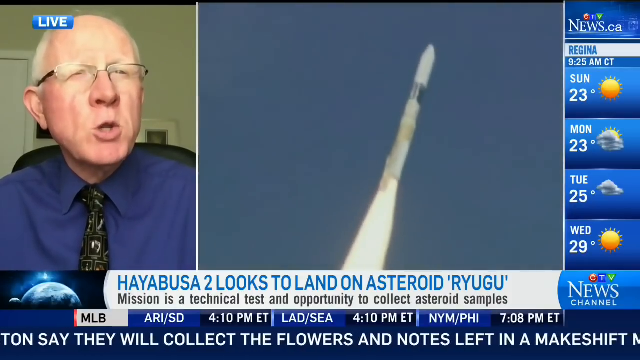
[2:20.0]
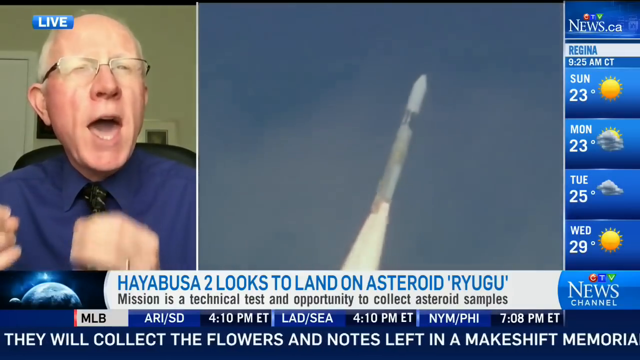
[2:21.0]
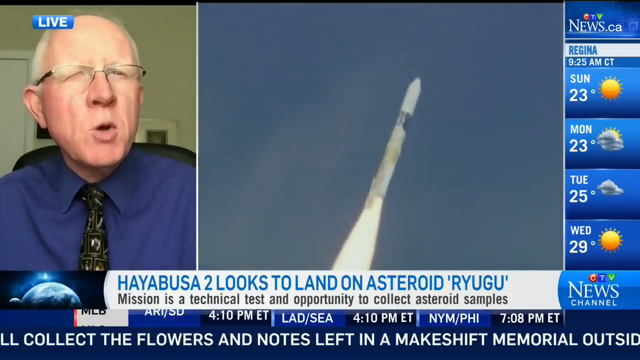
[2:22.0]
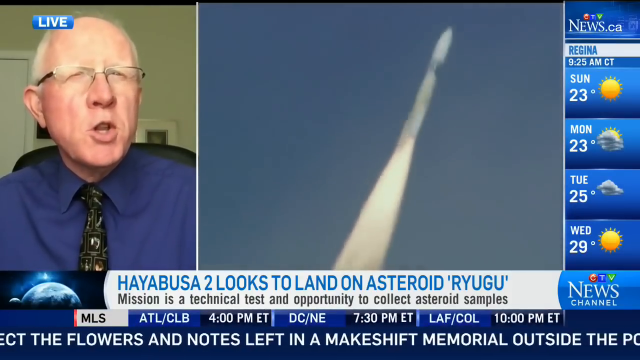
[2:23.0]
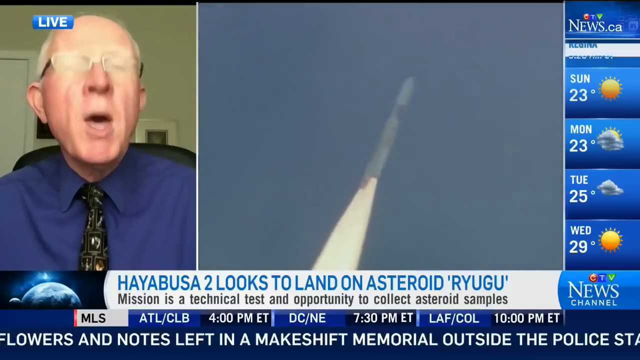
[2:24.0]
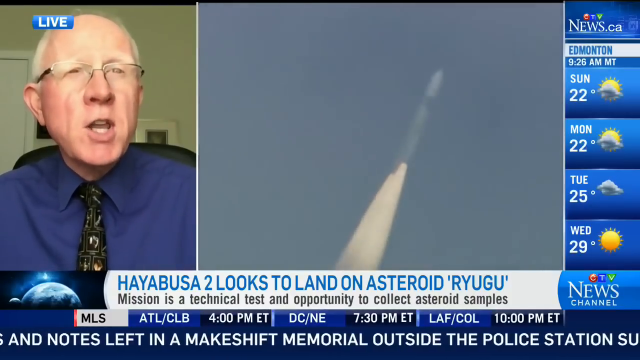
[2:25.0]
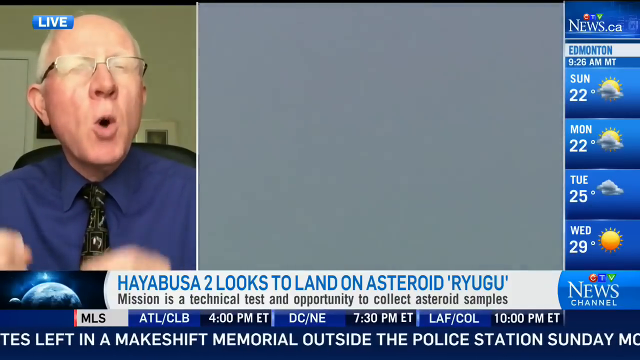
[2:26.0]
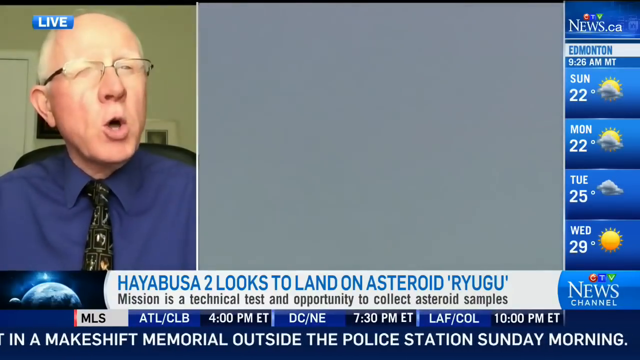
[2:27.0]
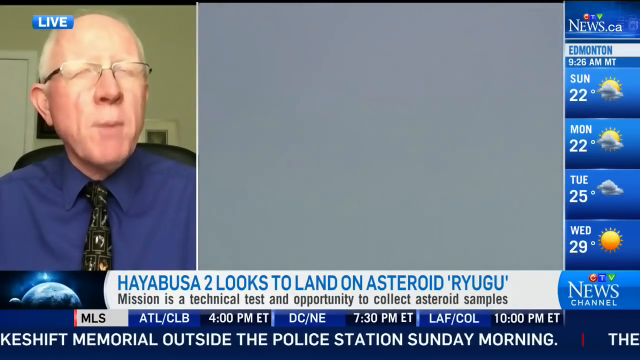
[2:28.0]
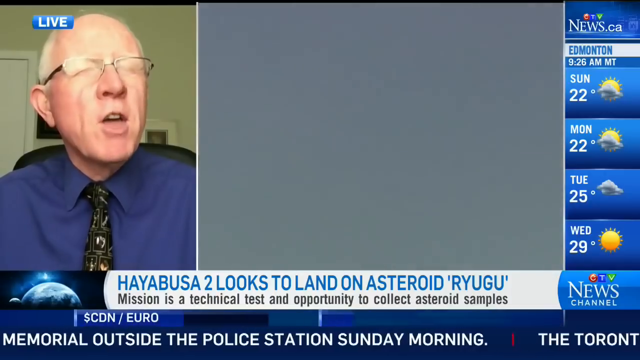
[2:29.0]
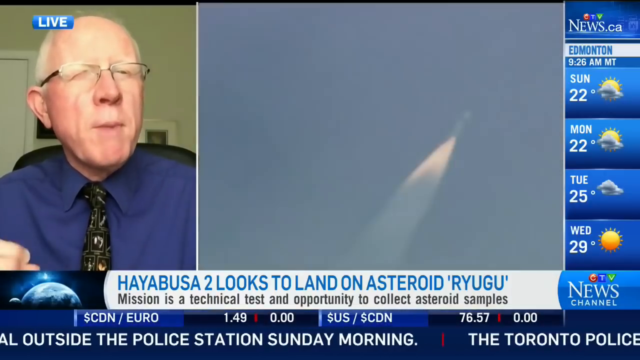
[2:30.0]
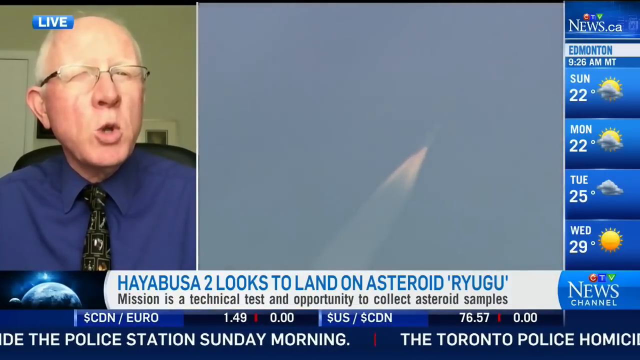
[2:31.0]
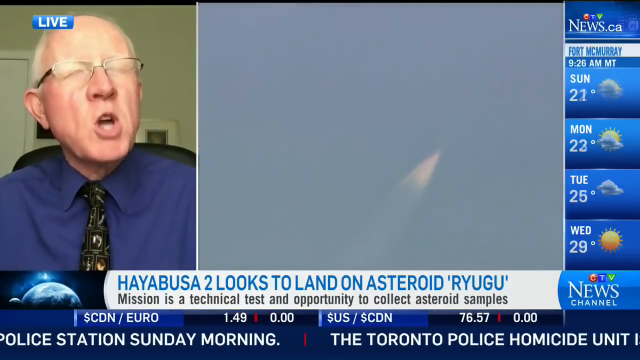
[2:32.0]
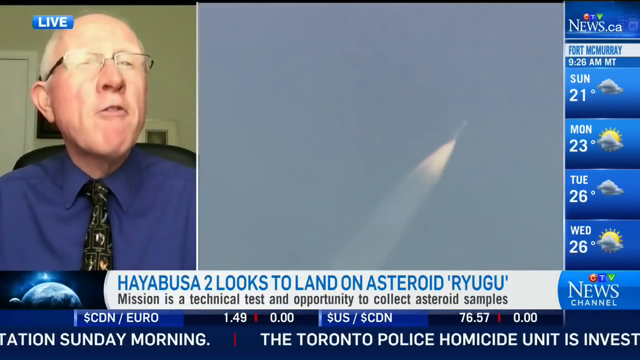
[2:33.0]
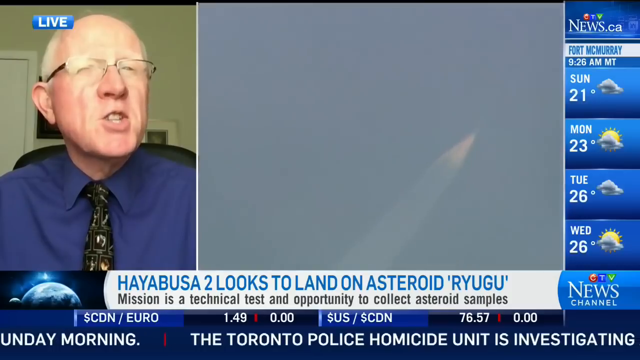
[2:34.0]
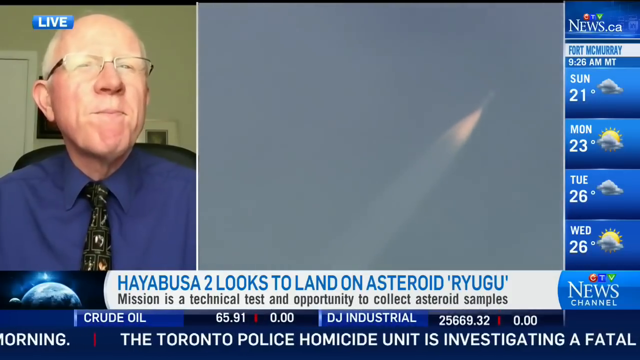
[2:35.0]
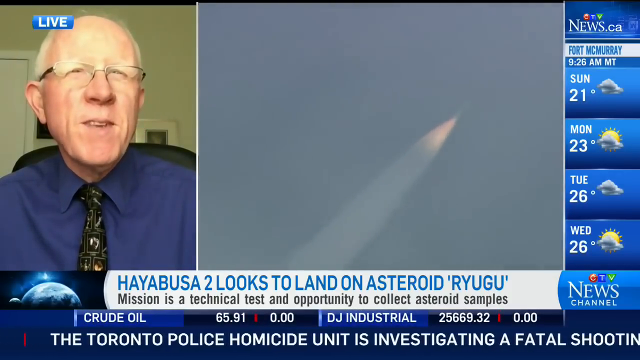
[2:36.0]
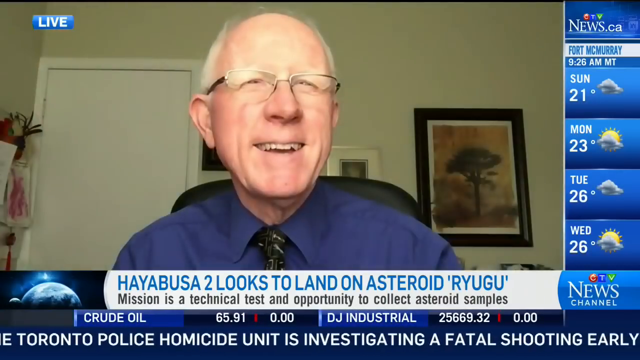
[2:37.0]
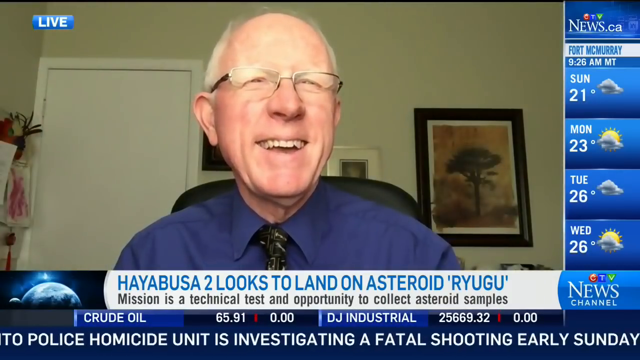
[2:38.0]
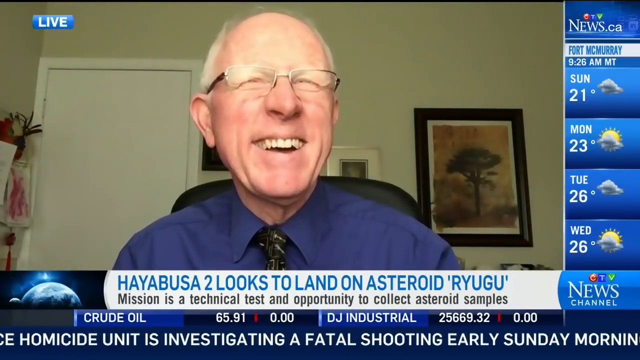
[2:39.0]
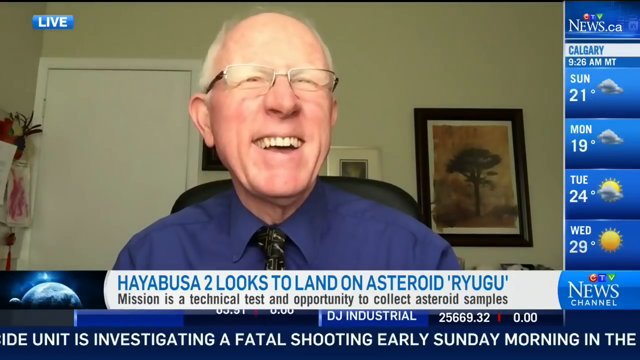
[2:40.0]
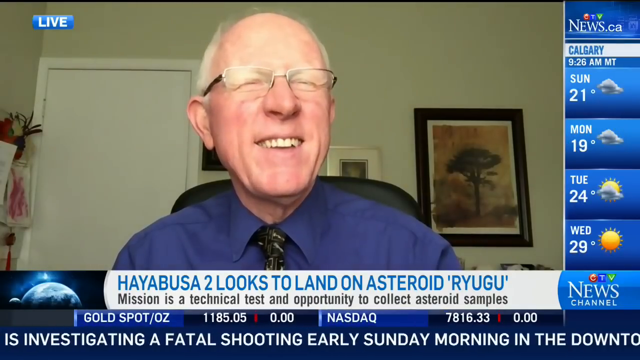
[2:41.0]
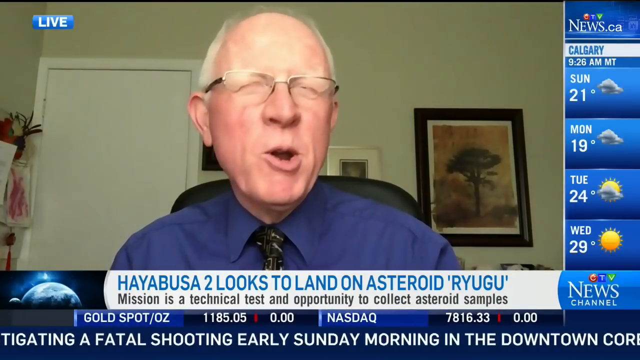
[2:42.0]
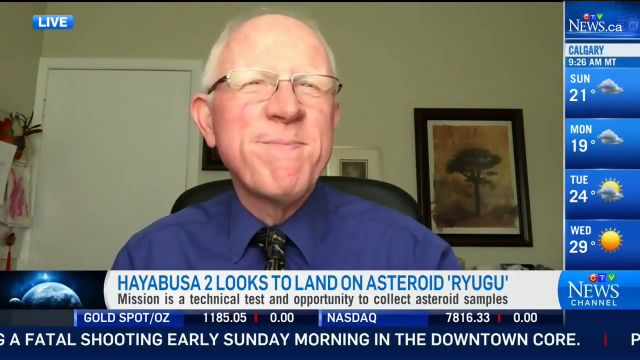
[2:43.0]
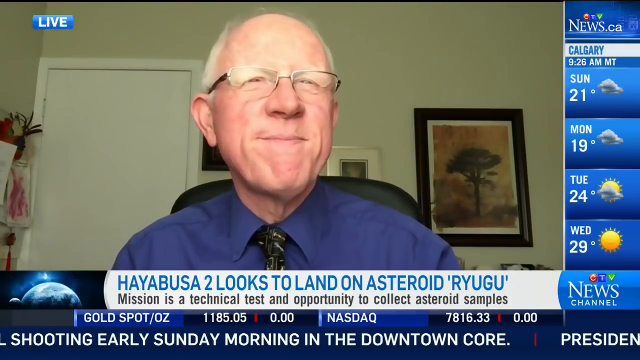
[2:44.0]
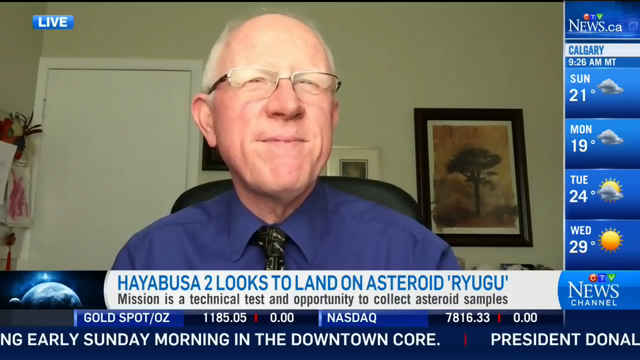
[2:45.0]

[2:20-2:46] The weather forecast for Thompson disappears quickly. A forecast for Regina follows: 23 degrees of sunshine on Sunday, 23 degrees and sunny intervals on Monday, 25 degrees and cloudy on Tuesday, and a hot 29 degrees of sunshine on Wednesday. Baseball fixtures list Arizona playing San Diego, L.A. Dodgers playing Seattle, and the New York Metros playing Philadelphia. A news item reports that in New Brunswick, Fredericton Police are removing a makeshift memorial left outside a police station to commemorate a person. The forecast for Edmonton and Fort McMurray shows cloudy and 21 degrees on Sunday, sunny intervals and 23 degrees on Monday, cloudy and 26 degrees on Tuesday, and sunny intervals and 26 degrees on Wednesday. Another item reports a fatal shooting in Toronto's downtown core early on Sunday morning.